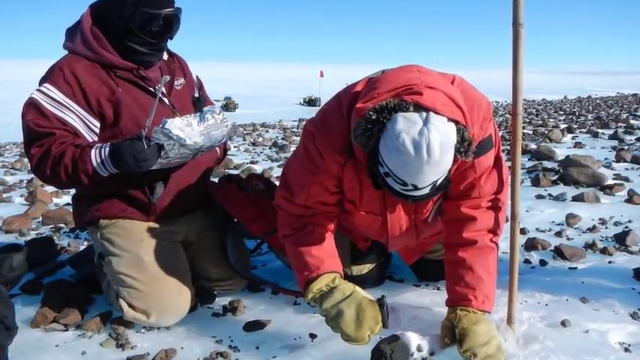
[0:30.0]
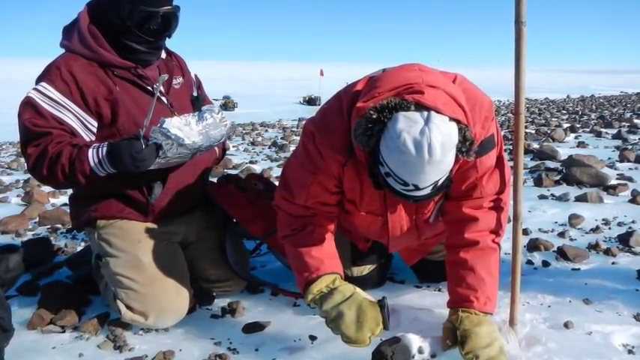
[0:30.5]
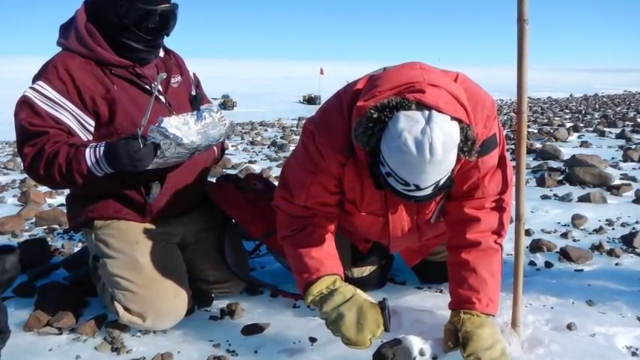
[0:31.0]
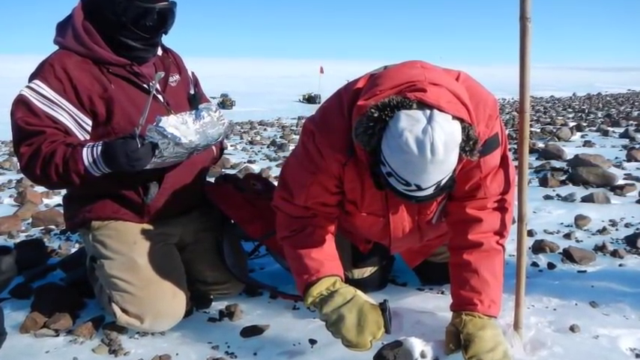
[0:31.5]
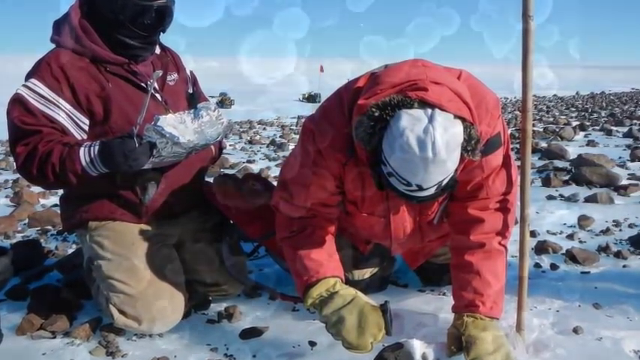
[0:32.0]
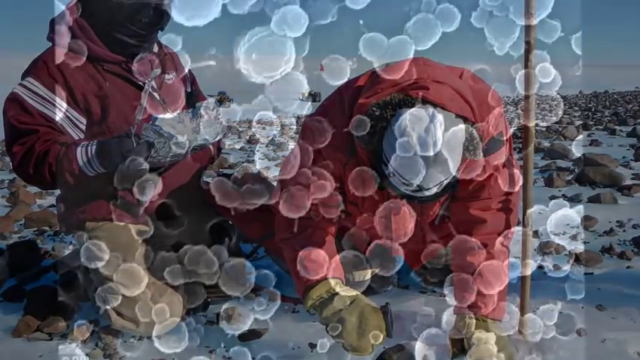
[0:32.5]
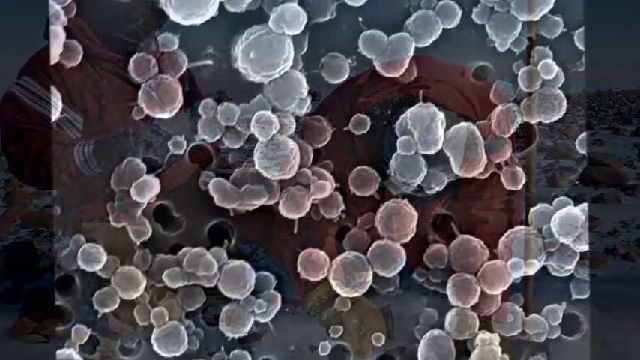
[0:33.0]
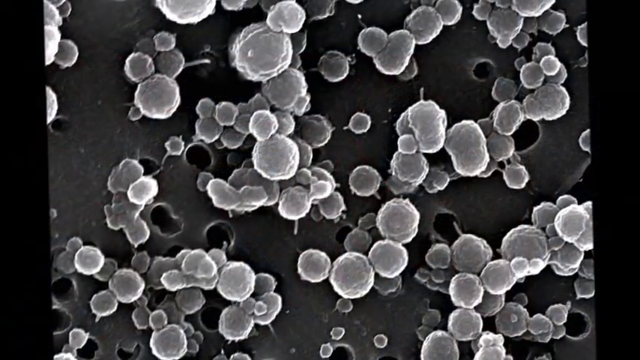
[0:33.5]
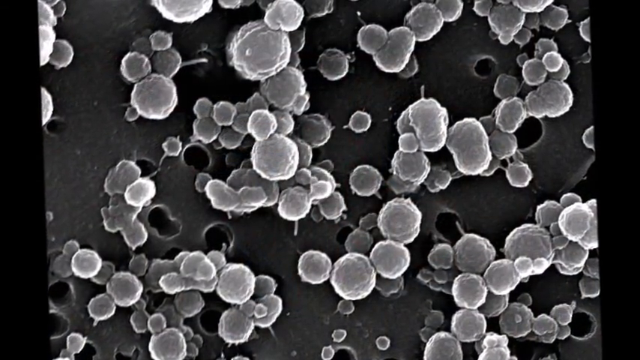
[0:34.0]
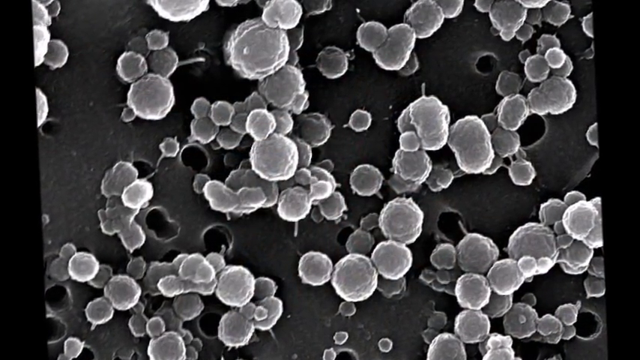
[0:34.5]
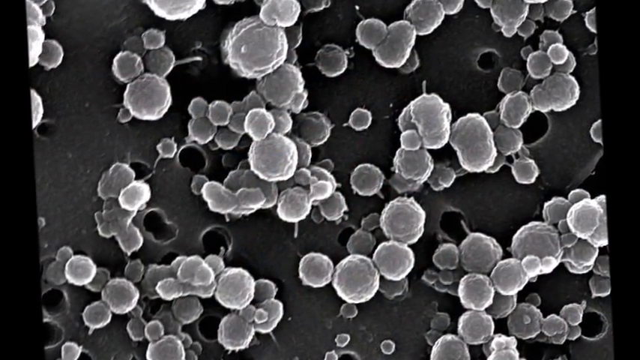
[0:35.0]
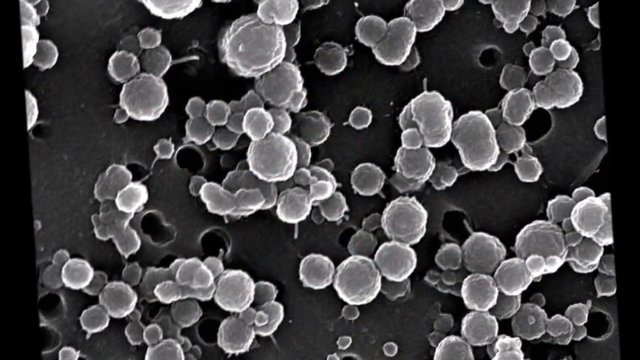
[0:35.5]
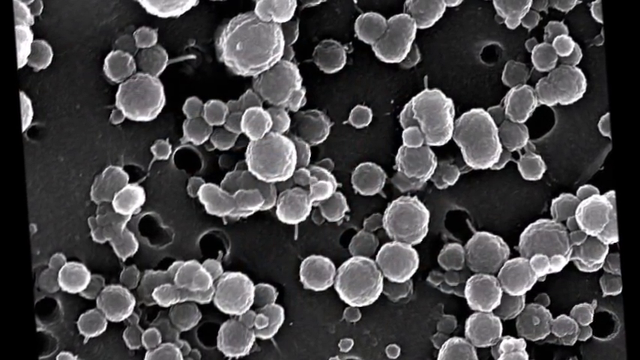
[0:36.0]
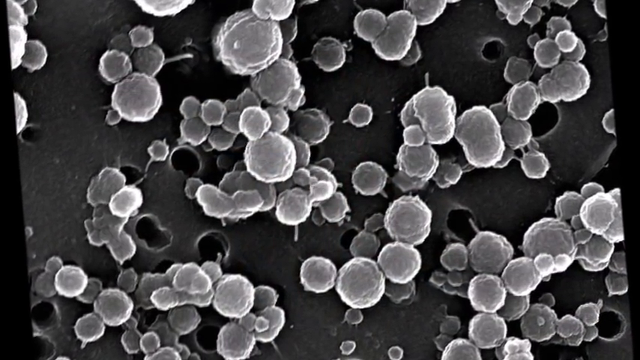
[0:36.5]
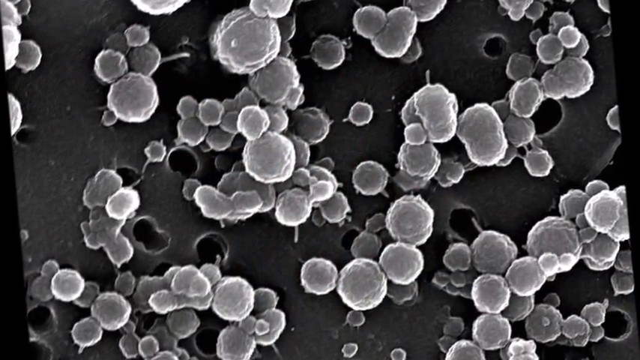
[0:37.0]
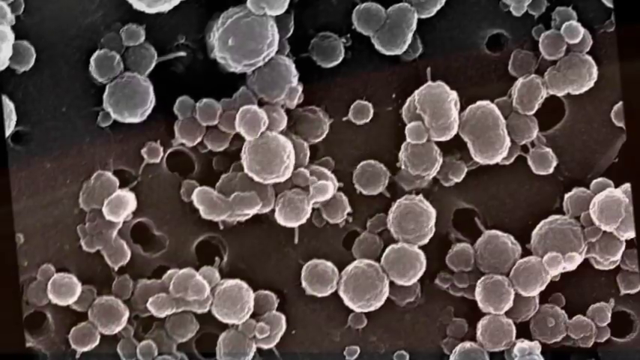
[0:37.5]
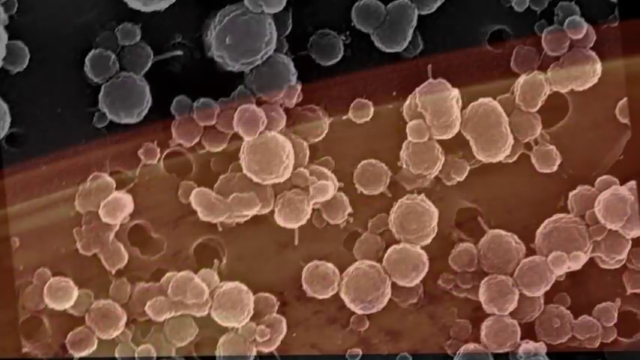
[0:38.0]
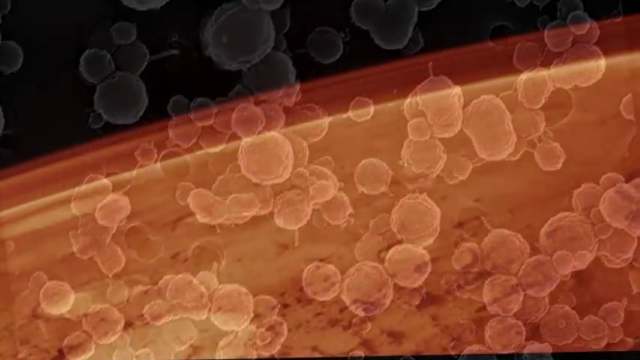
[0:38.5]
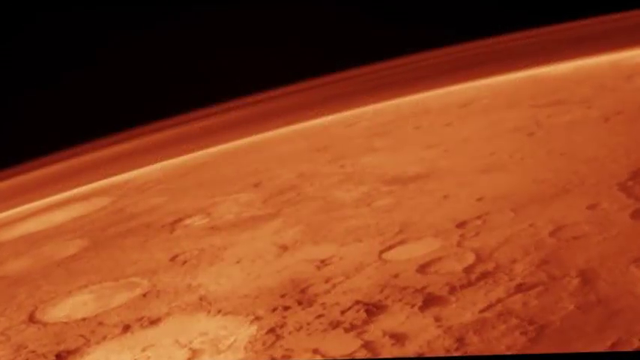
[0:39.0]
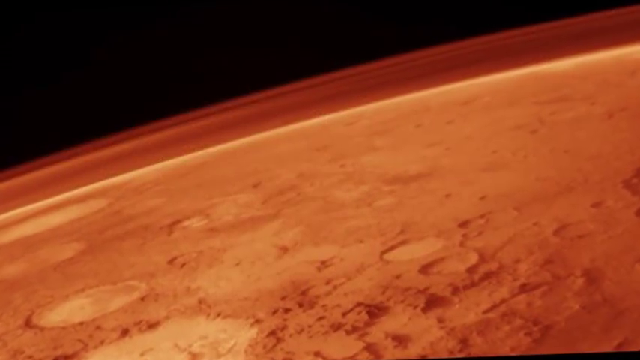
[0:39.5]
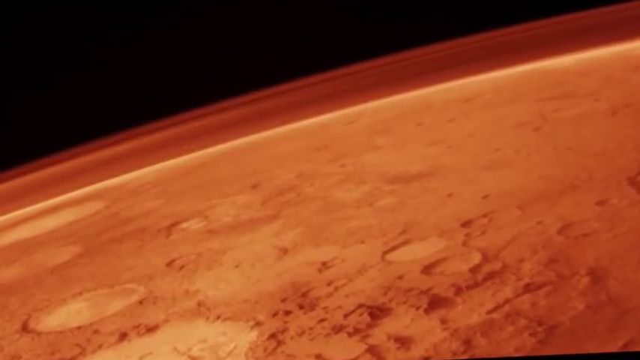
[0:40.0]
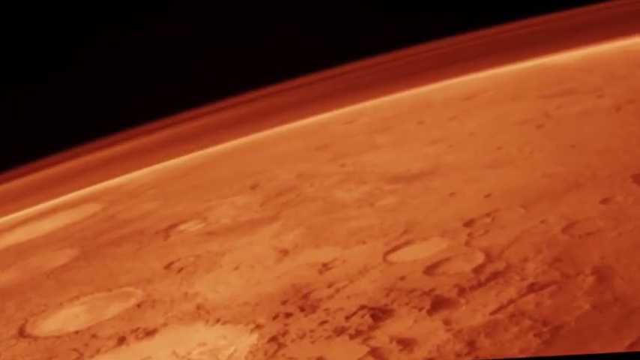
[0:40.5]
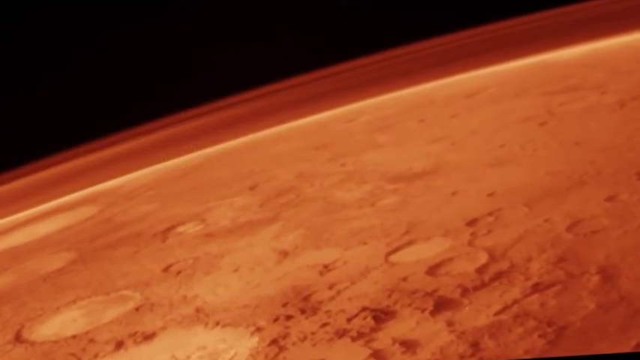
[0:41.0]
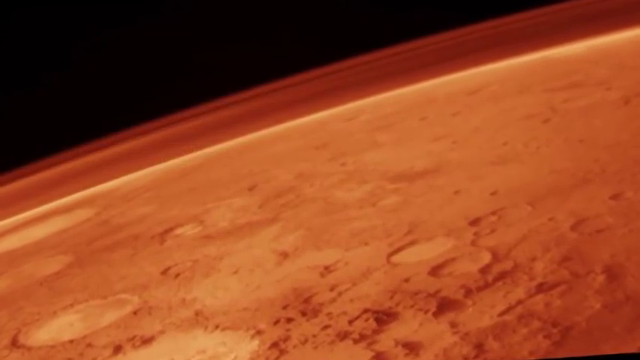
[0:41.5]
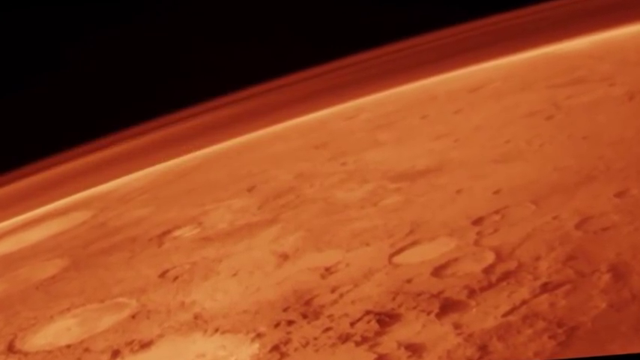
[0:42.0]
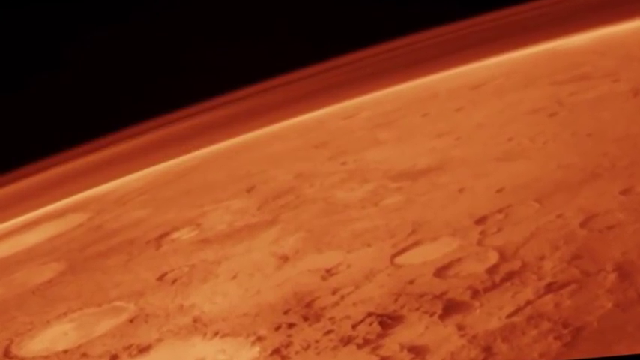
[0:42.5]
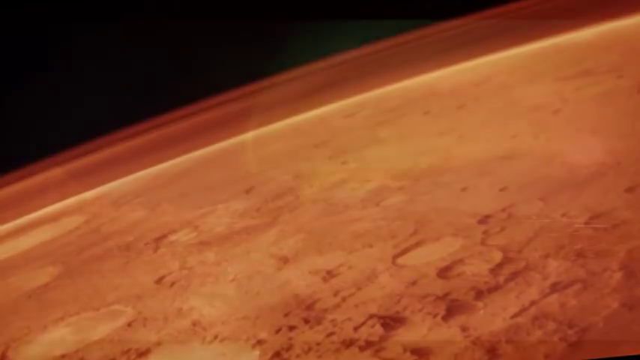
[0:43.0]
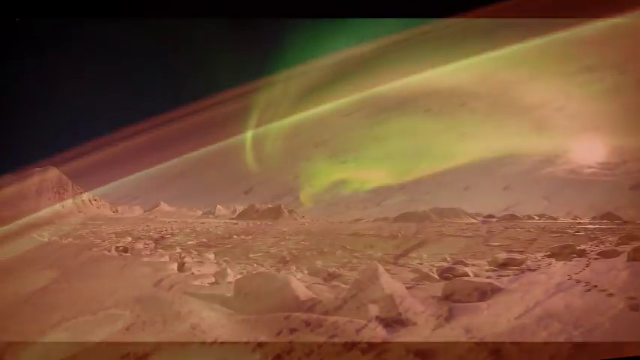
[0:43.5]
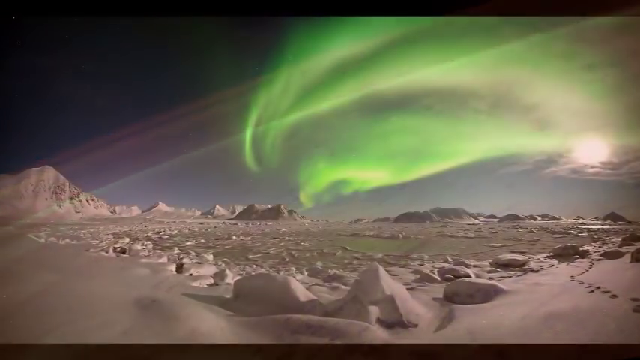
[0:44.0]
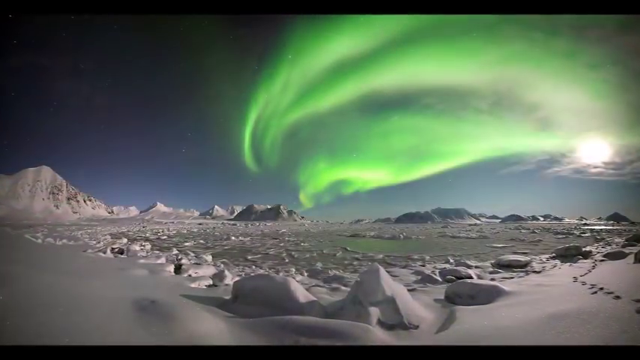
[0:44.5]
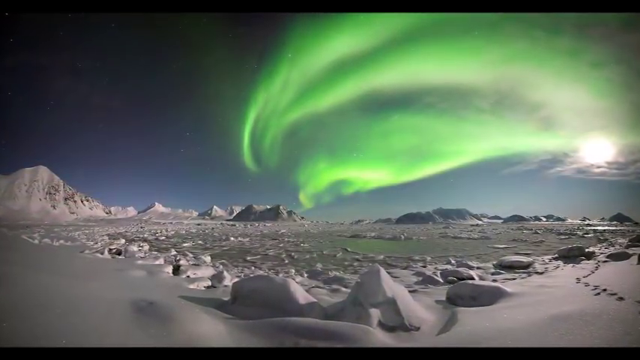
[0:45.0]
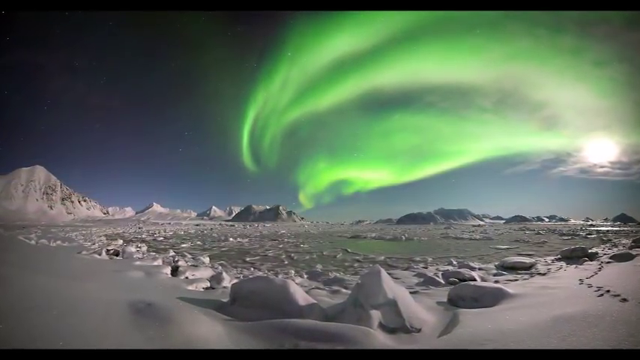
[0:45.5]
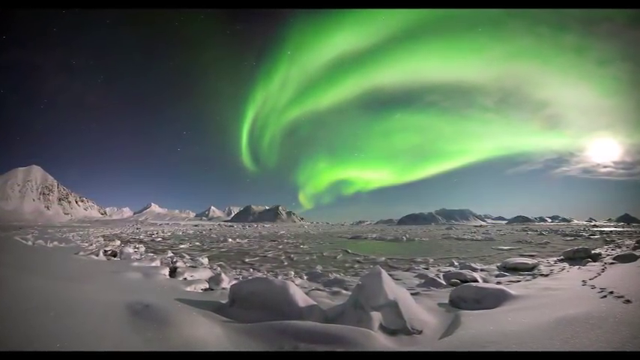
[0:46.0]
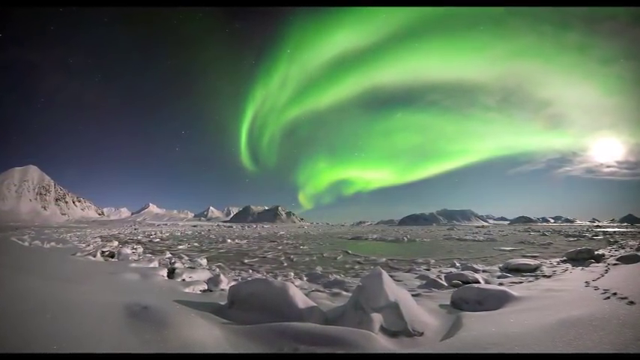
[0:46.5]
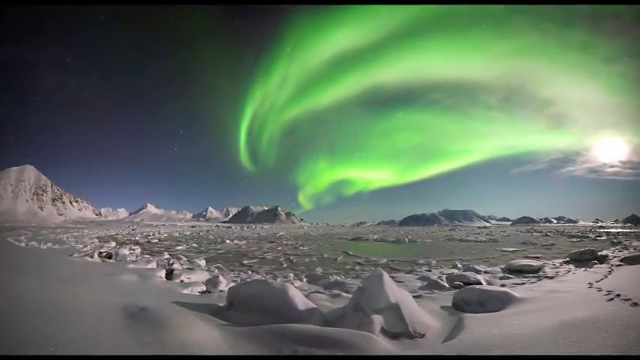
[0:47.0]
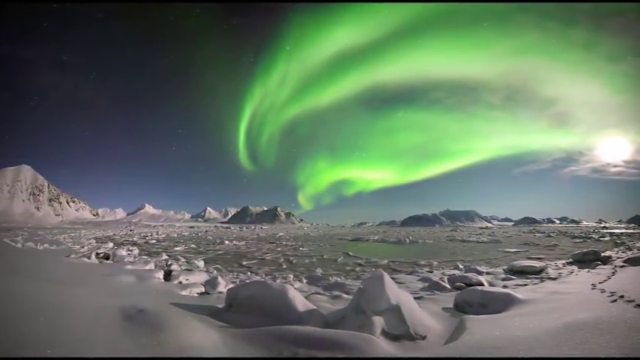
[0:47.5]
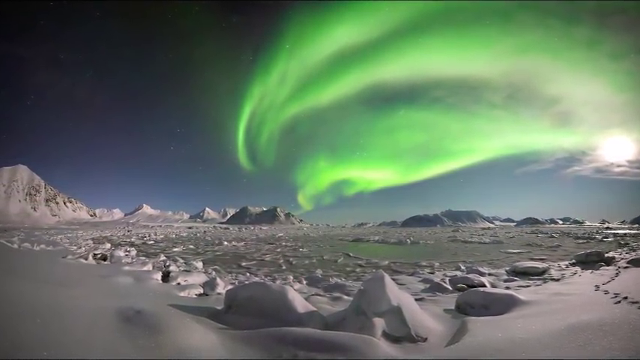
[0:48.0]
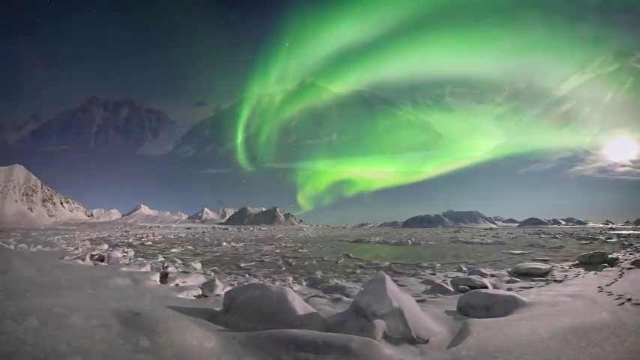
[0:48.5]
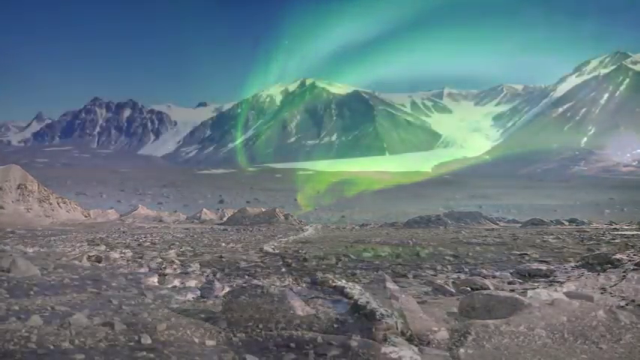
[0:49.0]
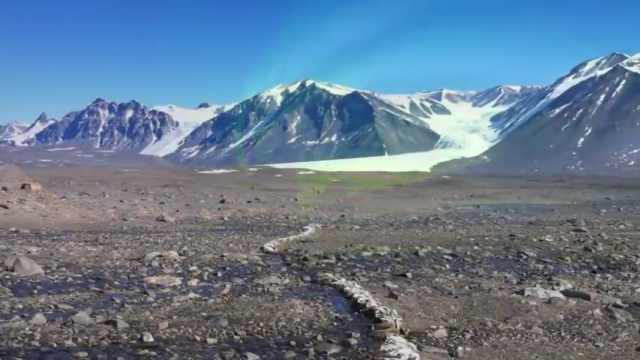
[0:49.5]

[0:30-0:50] Two people do research in Antarctica. One wears a dark red jacket, brown pants and goggles on the face, and holds some material in their hands. The other, who is digging into the ice, also wears a red jacket, plus a white hat and green gloves. Next comes an image of what appear to be molecular items, then a picture of a brown planet with holes in it in the sky. A picture of a lake in the ice follows, with a green cloud in the sky and the sun behind it among some clouds. Another photo shows a field with snowy mountains.